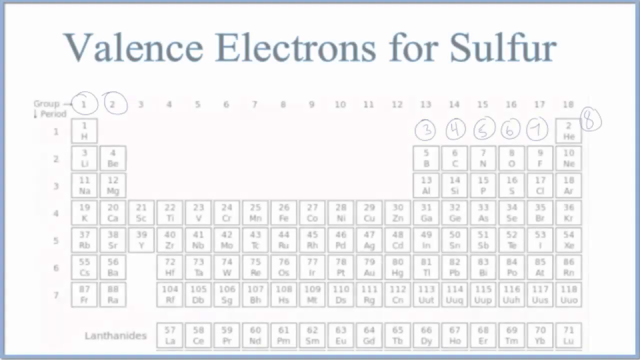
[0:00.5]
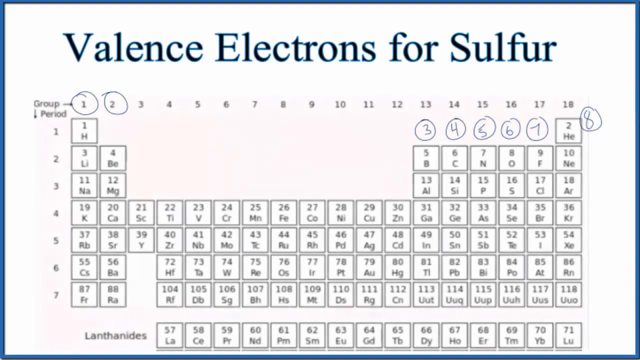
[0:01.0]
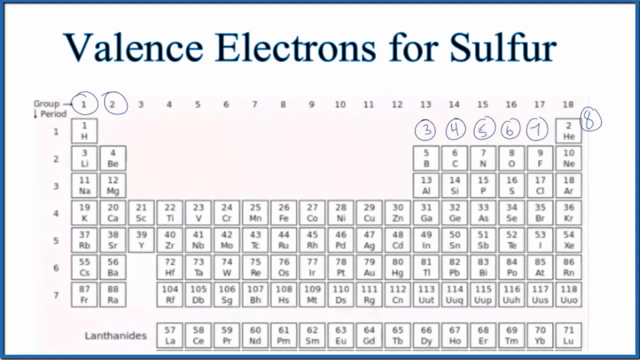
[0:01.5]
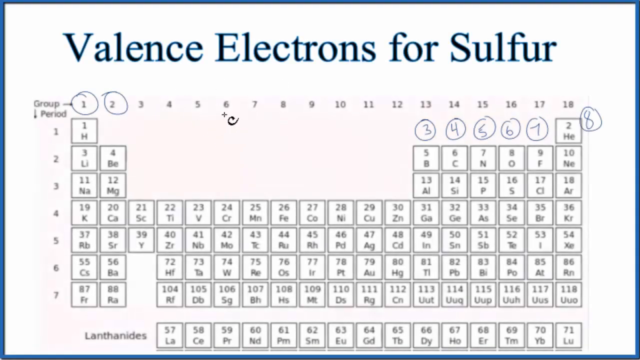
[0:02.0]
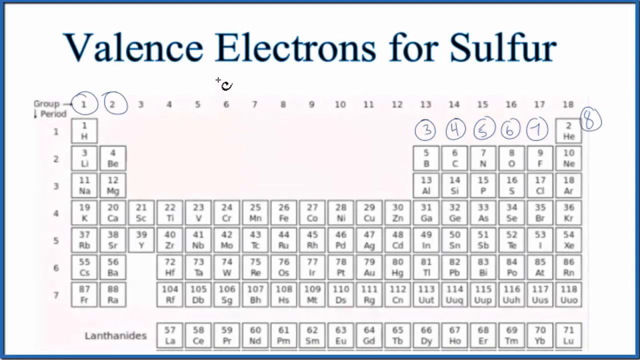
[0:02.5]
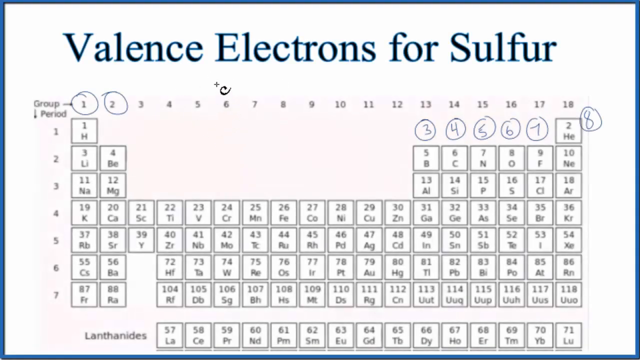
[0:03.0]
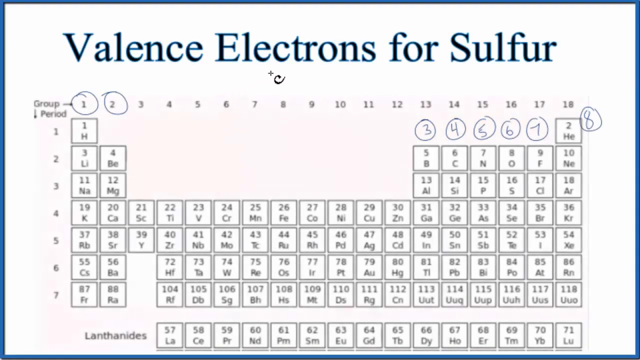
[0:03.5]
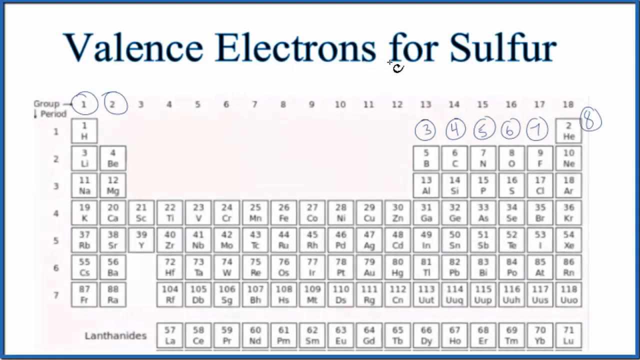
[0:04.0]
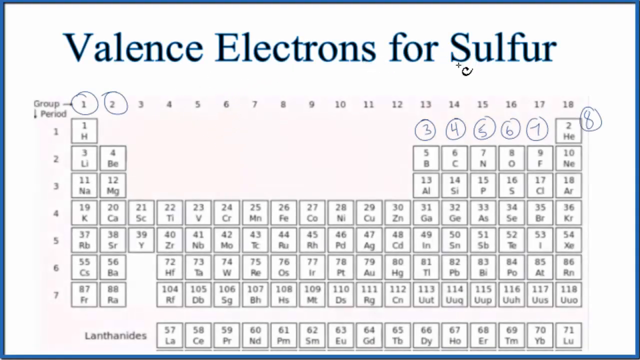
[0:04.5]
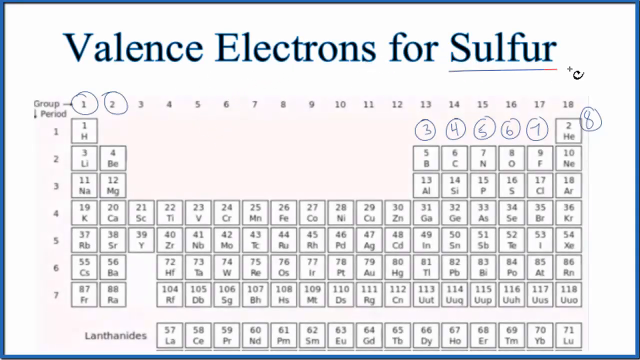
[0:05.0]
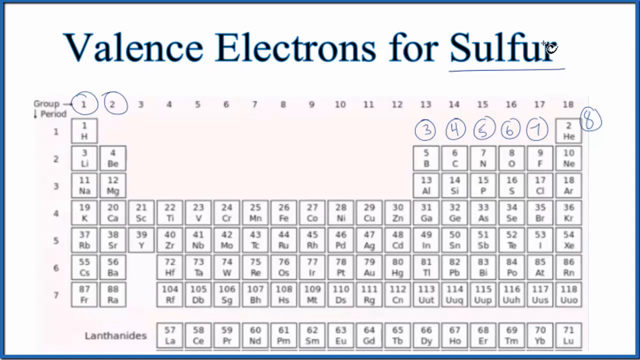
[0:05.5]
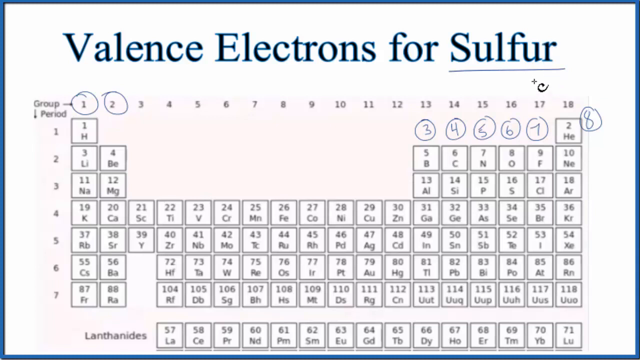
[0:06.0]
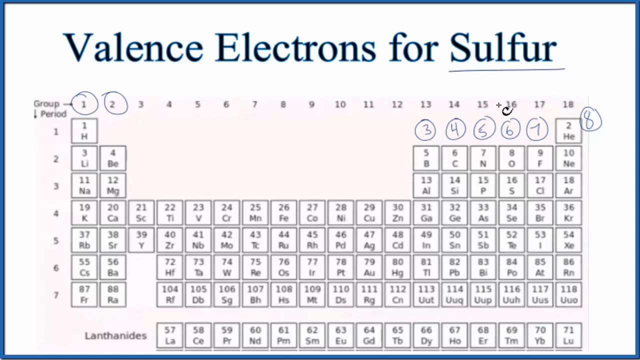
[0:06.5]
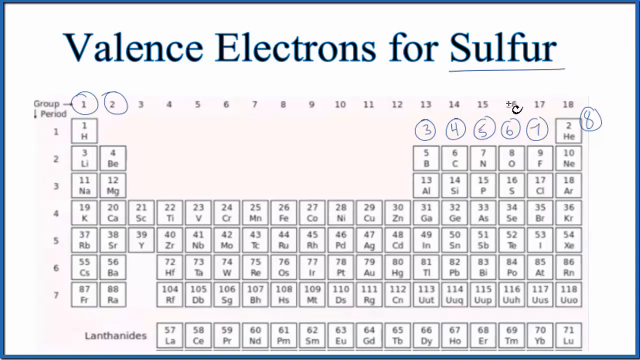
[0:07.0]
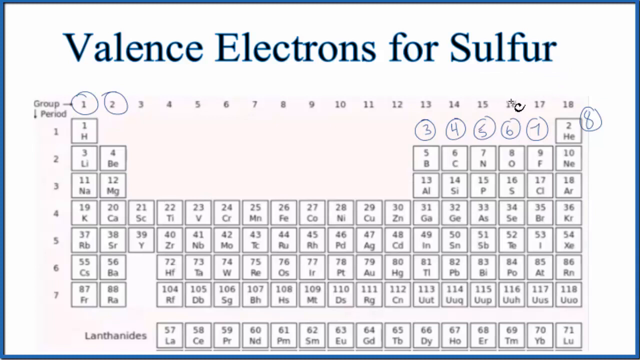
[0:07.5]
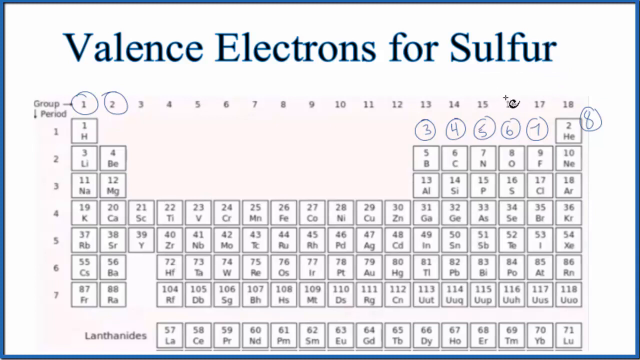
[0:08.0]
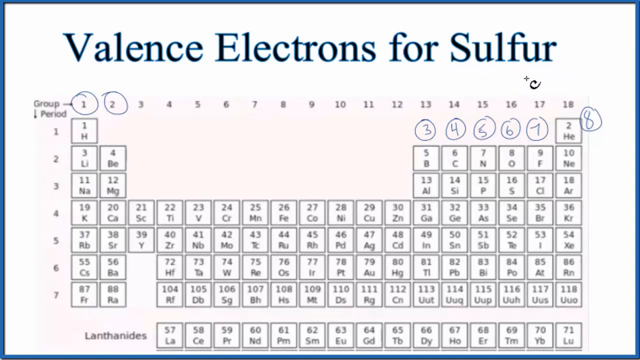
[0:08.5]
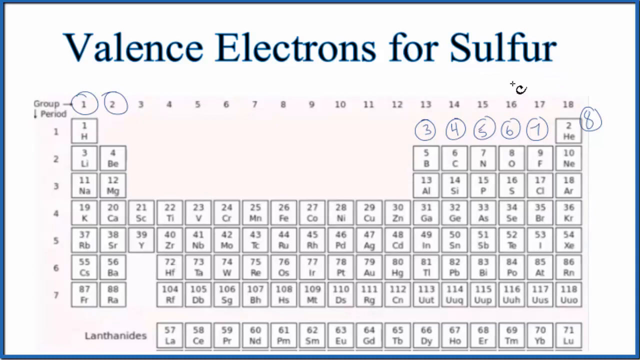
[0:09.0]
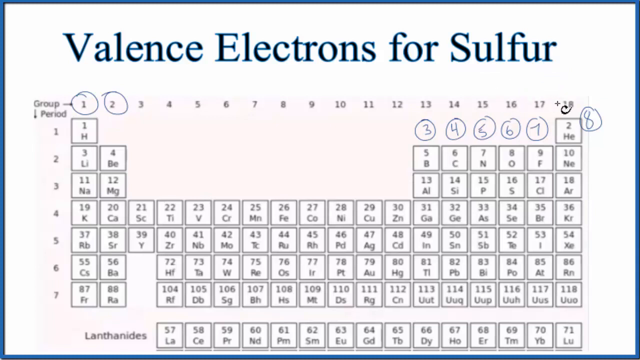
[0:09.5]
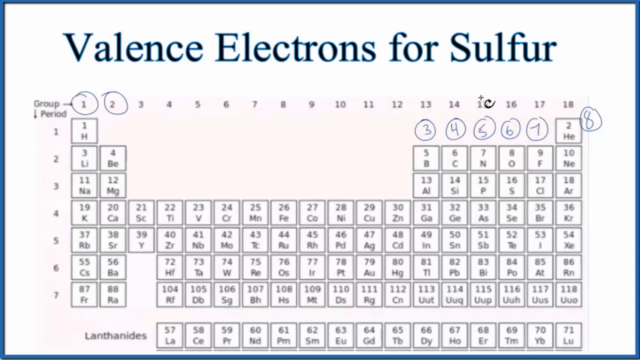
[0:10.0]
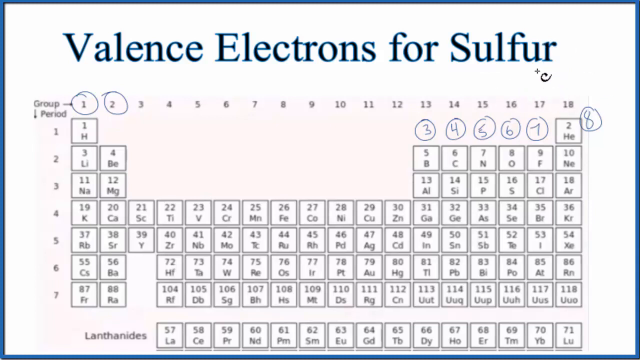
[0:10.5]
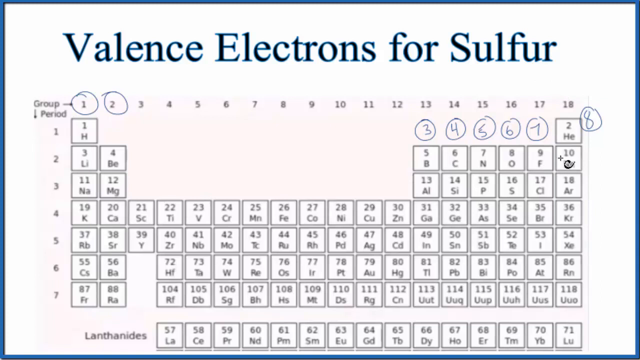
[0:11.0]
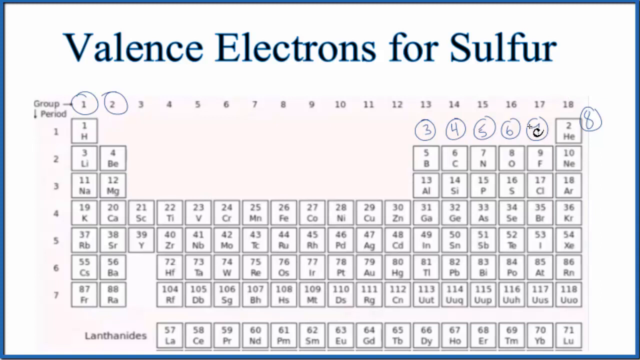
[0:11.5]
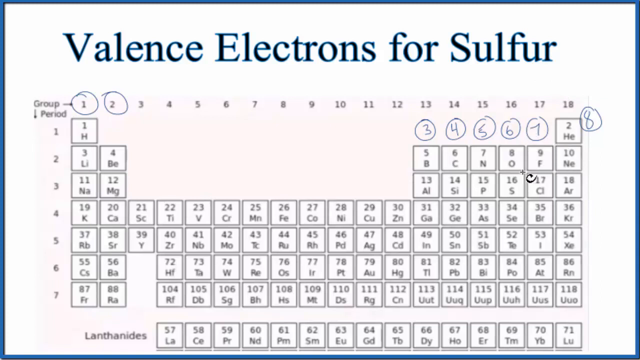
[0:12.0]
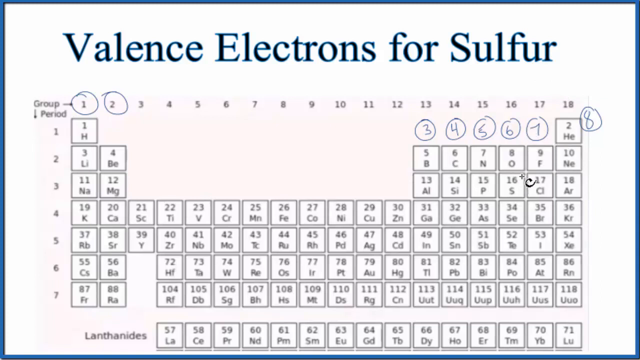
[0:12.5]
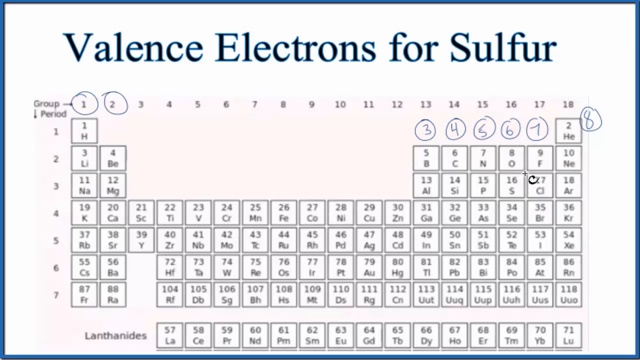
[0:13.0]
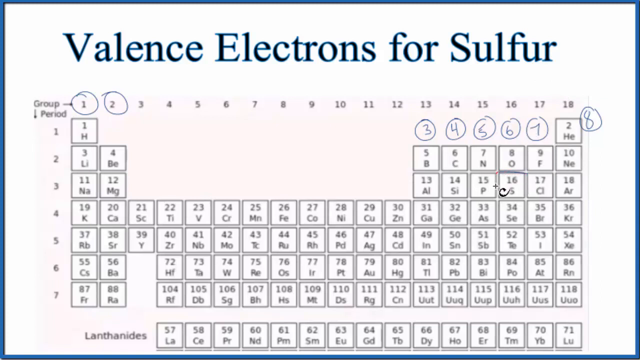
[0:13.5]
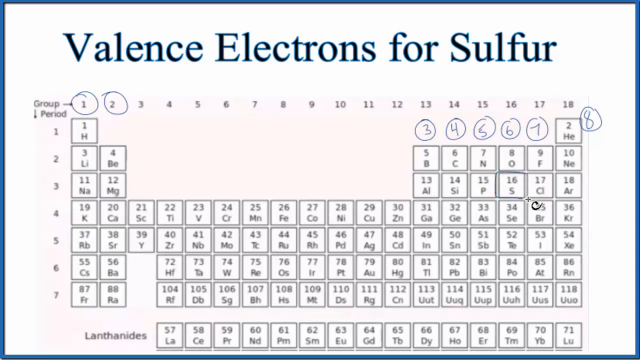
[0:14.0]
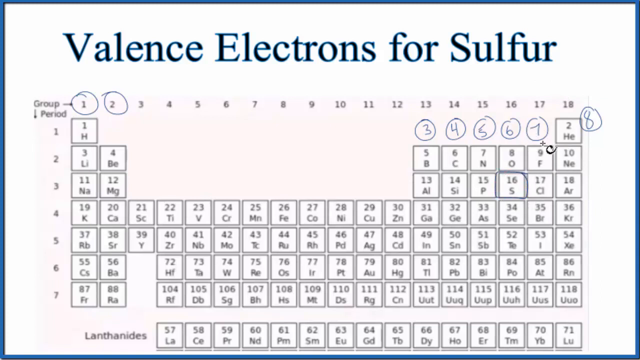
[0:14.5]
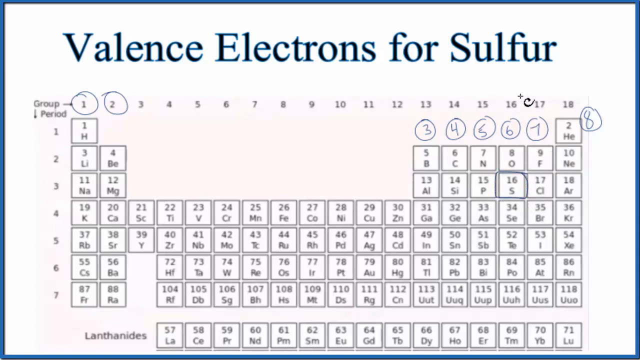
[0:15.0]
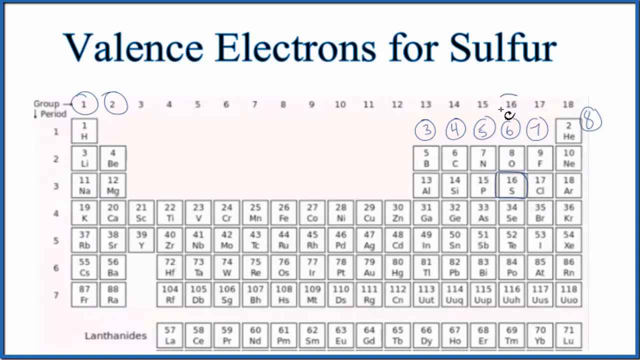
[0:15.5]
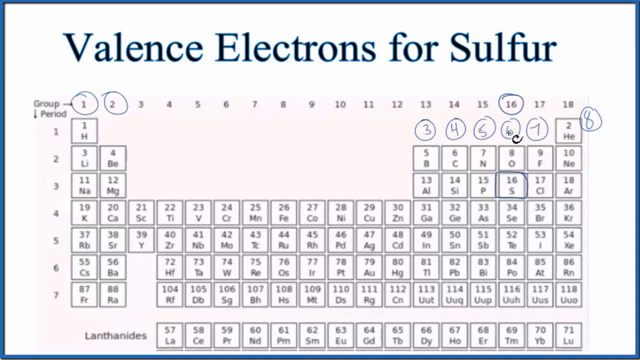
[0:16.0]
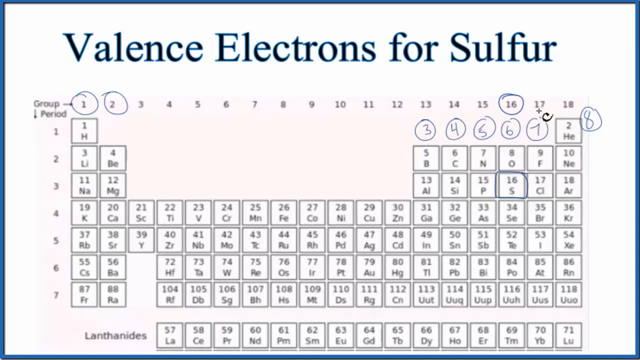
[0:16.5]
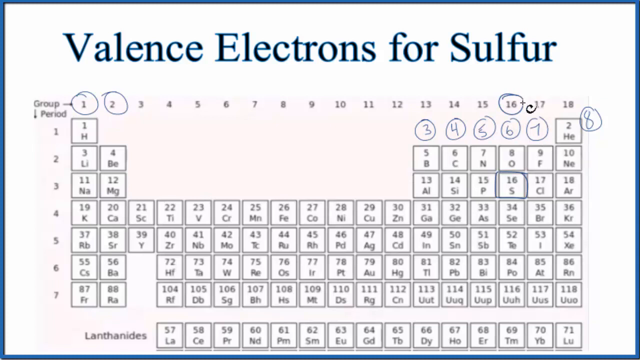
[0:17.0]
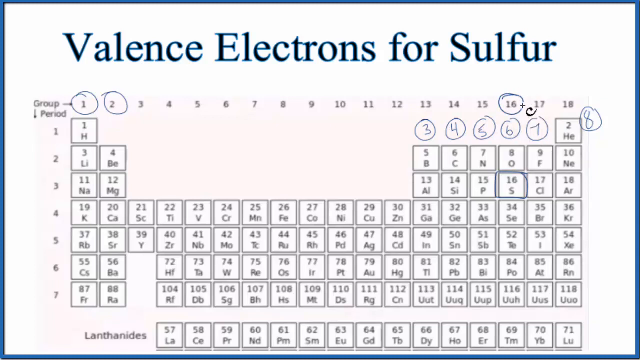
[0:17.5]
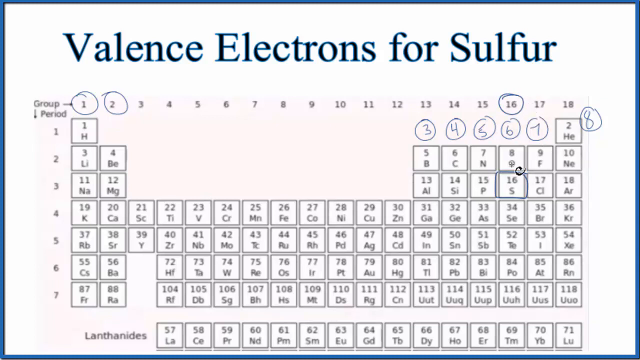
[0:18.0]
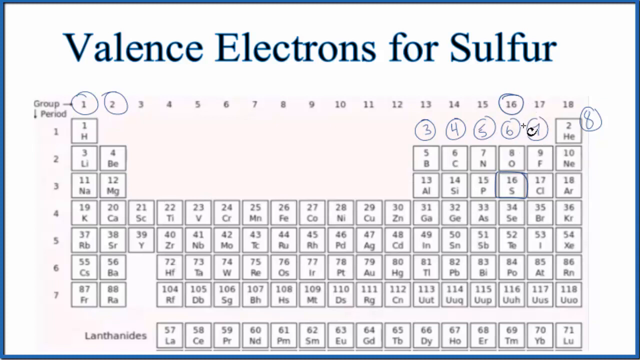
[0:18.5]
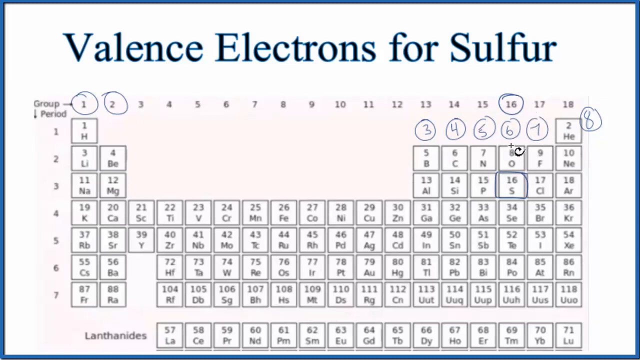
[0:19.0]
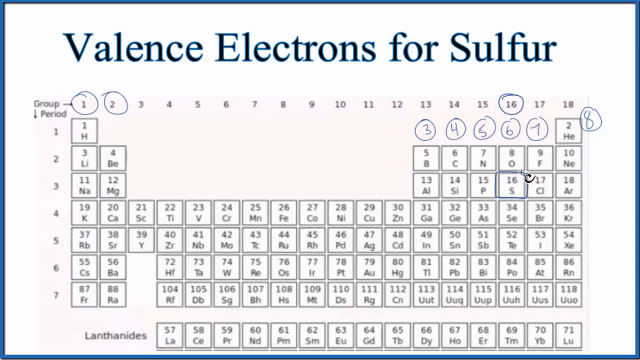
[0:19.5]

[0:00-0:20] A page titled "valence electrons for sulfur" is shown while someone moves a cursor over it, kind of underlining the word "sulfur" with the pointer. Below is what almost looks like a periodic table. The numbers 1 and 2 on the left are circled, and several numbers on the right, 3, 4, 5, 6 and 7, are circled as well; then there is a space by a box that has a 2 in it, and an 8 is circled. A 16 at the top is also circled. The table has numbers down the side from 1 to 7, and its boxes each contain a number and a letter or two: the first box reads "1H", the second row has "3Li" and "4Be", and further along the 5 has a B, the 6 a C, and the 7 an N.